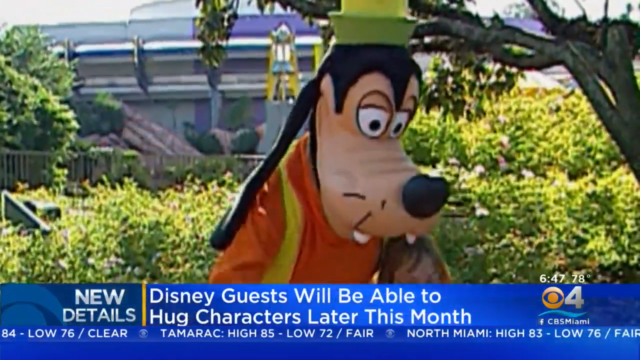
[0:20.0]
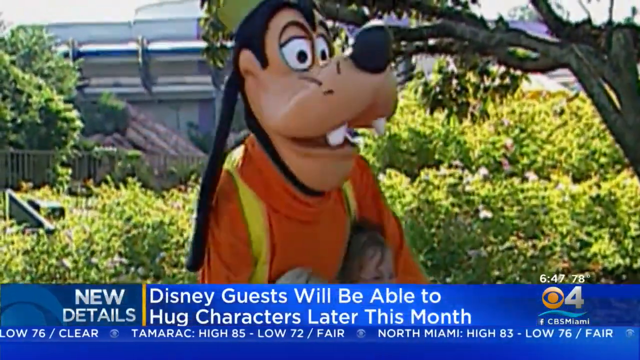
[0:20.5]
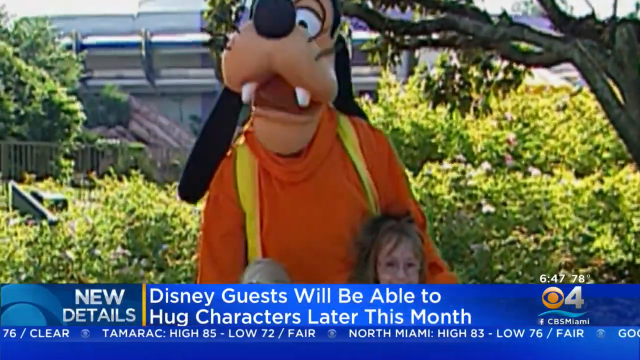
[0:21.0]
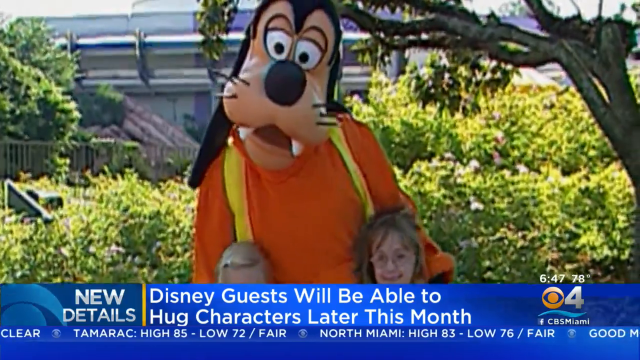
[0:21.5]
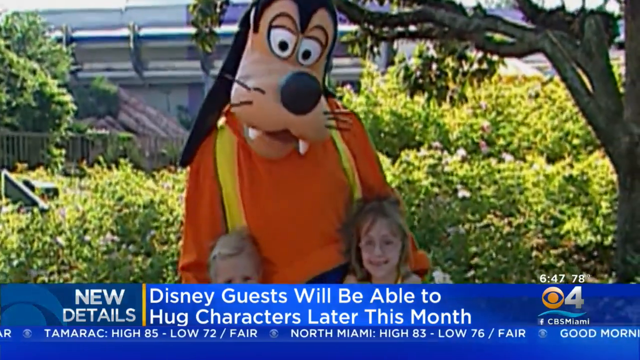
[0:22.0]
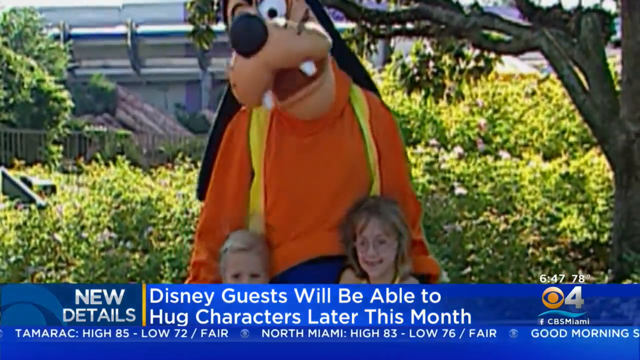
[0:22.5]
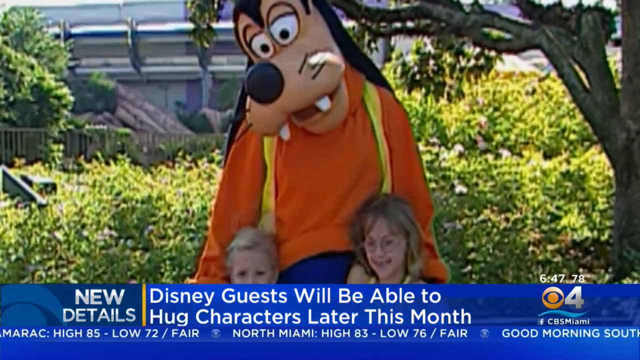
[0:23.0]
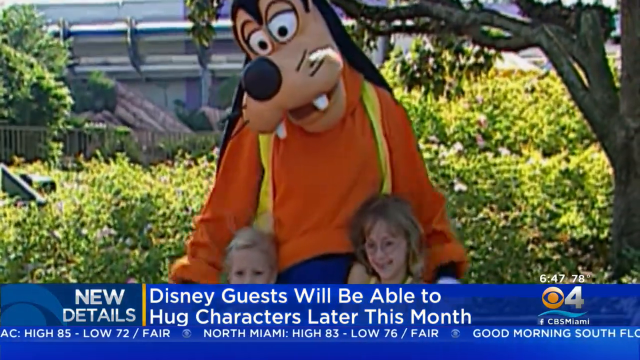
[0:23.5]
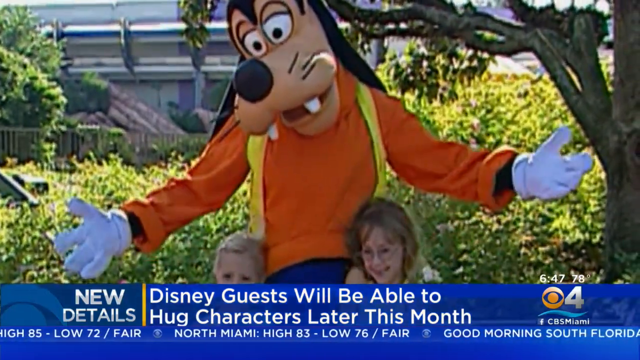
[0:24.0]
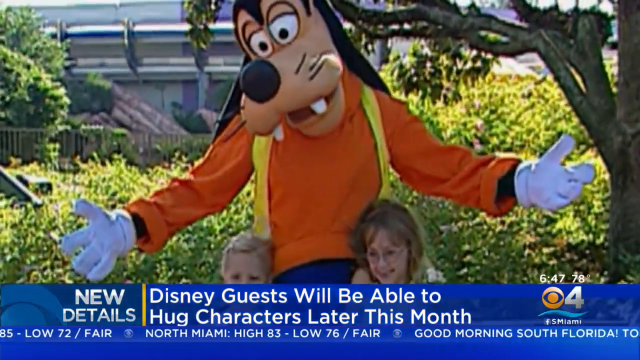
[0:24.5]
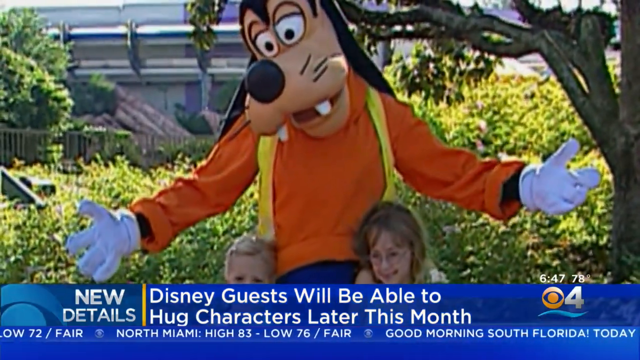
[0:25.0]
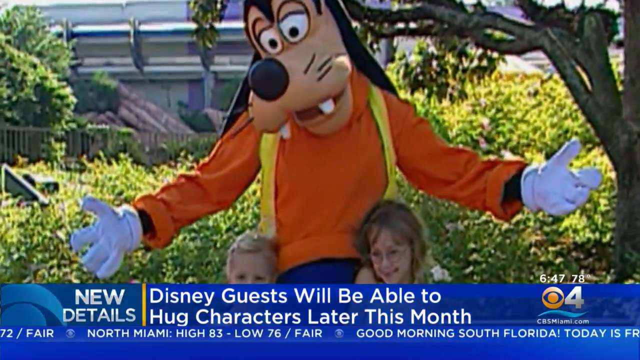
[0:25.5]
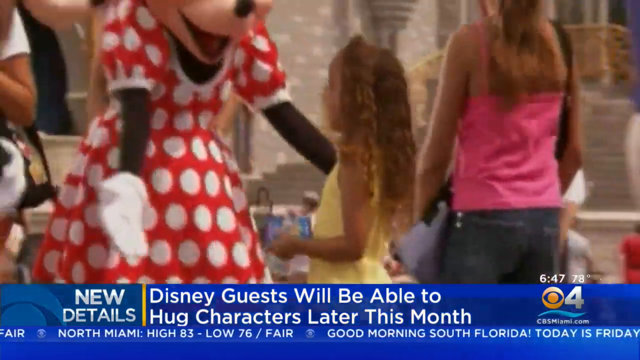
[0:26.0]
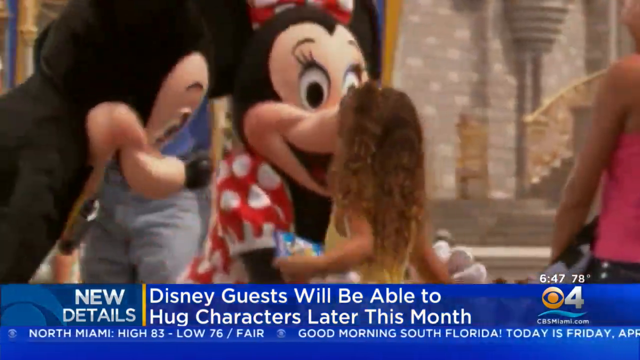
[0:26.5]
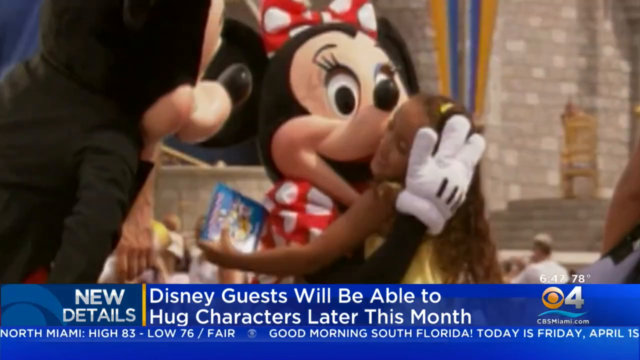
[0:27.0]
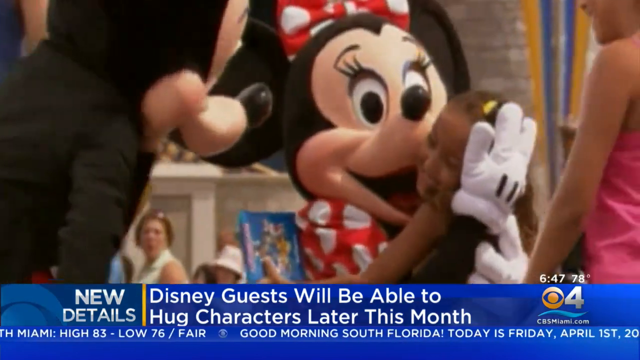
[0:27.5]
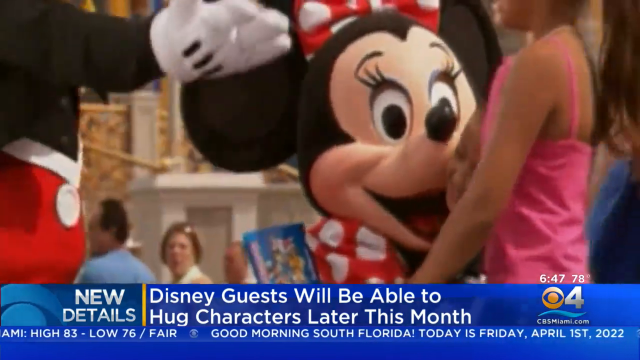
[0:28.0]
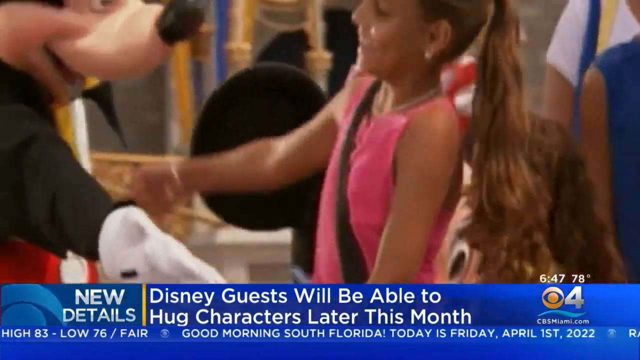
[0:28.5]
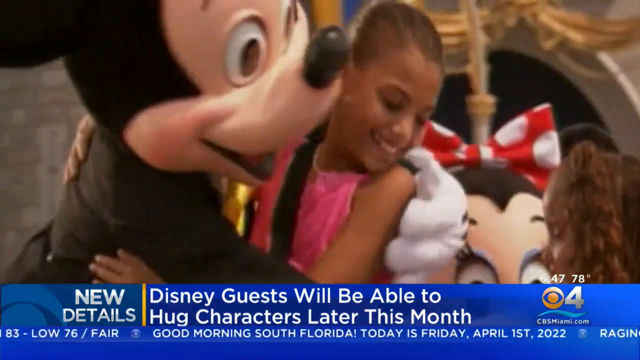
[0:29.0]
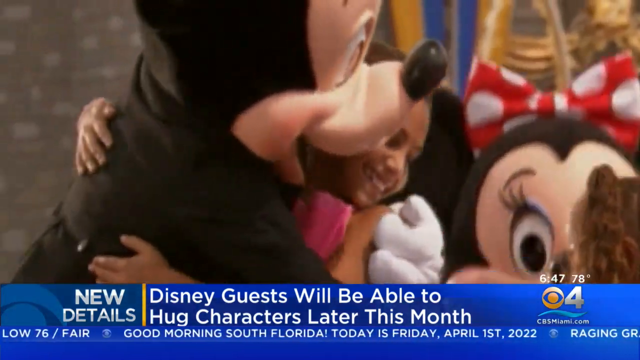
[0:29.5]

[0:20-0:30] The broadcast is from Channel 4 News Miami, CBS. At the bottom, the time is shown as 6:47 and the temperature as 78. Goofy, the Disney character, has his arms wide open with two little kids beside him, and the kids are obviously very happy. The kids are then shown hugging Minnie Mouse and Mickey Mouse. The news caption at the bottom says "New details, Disney guests will be able to hug characters later this month." A crawl bar going across the bottom has the weather and says "good morning, South Florida today is Friday April 1st, 2022."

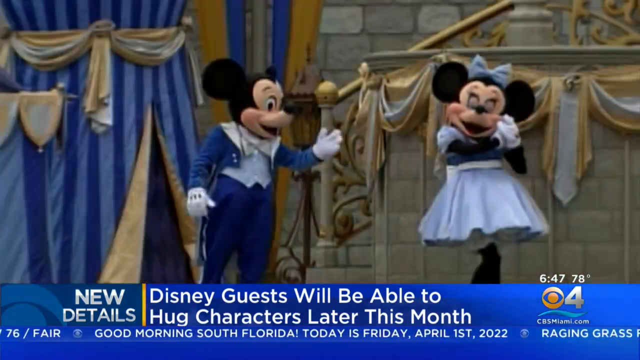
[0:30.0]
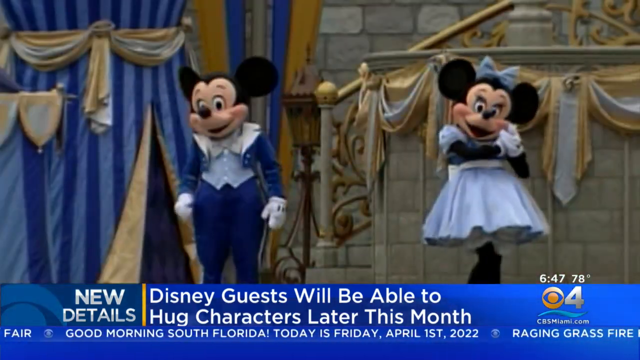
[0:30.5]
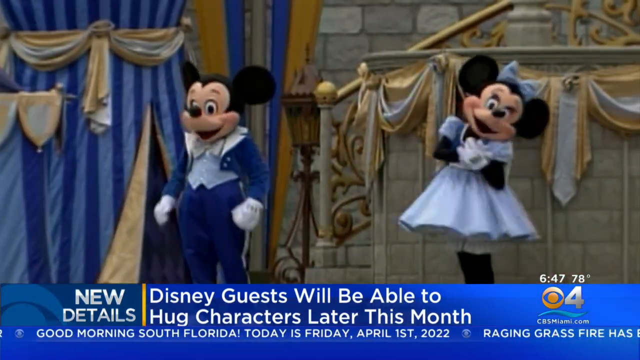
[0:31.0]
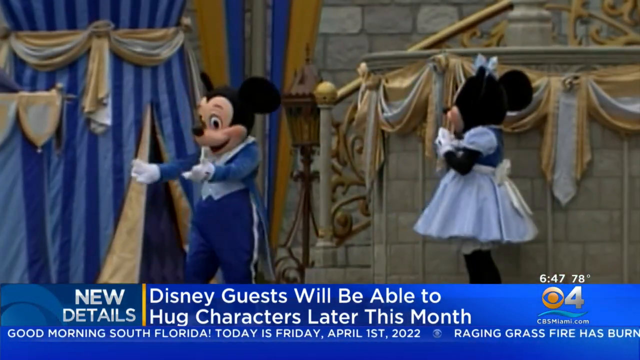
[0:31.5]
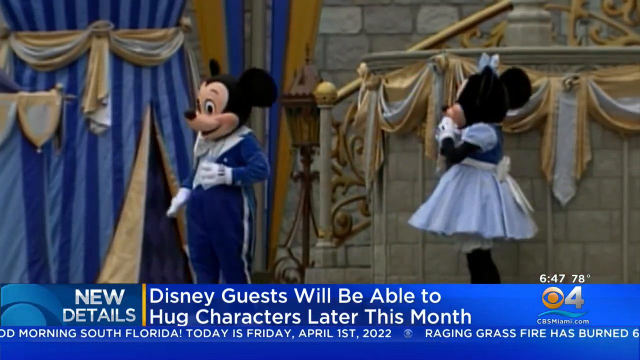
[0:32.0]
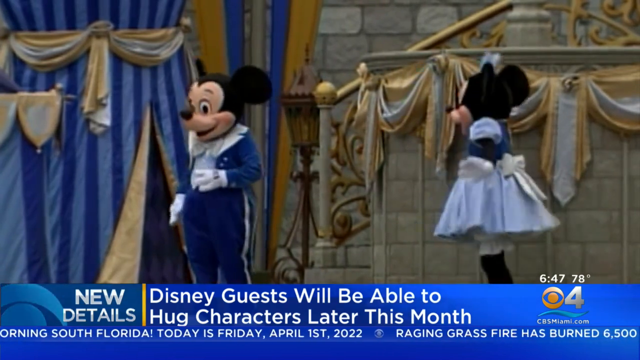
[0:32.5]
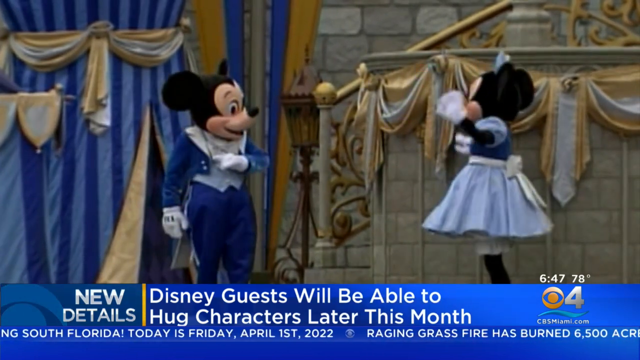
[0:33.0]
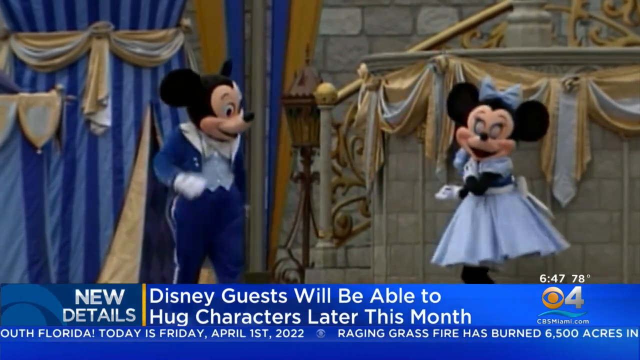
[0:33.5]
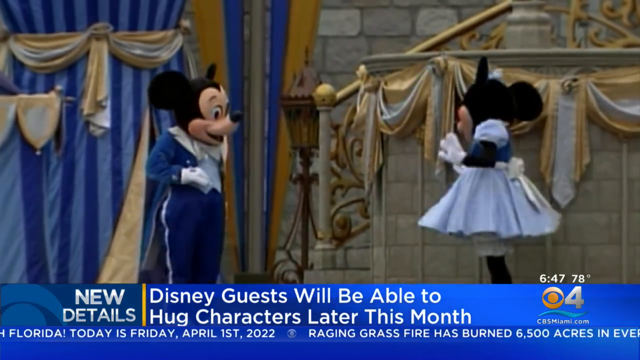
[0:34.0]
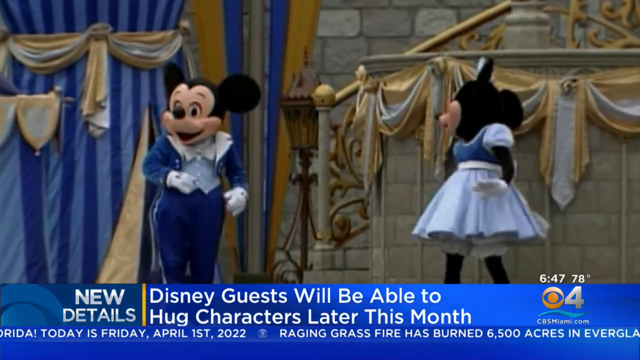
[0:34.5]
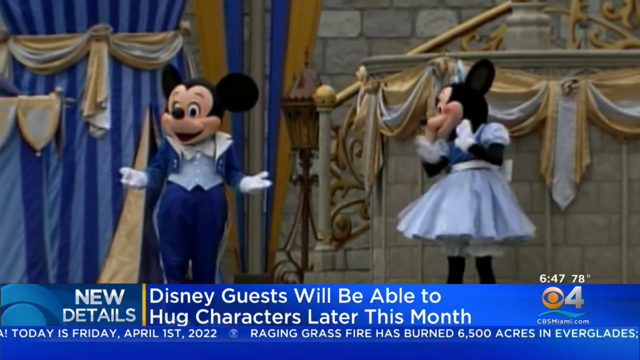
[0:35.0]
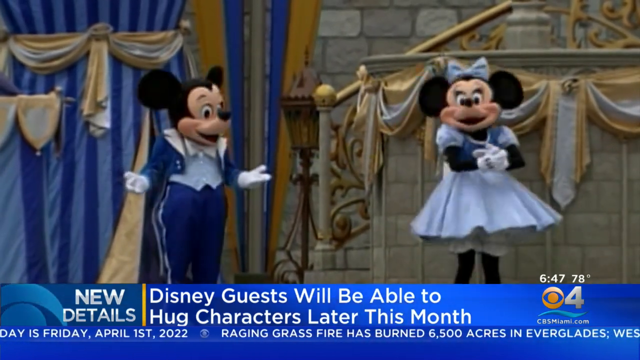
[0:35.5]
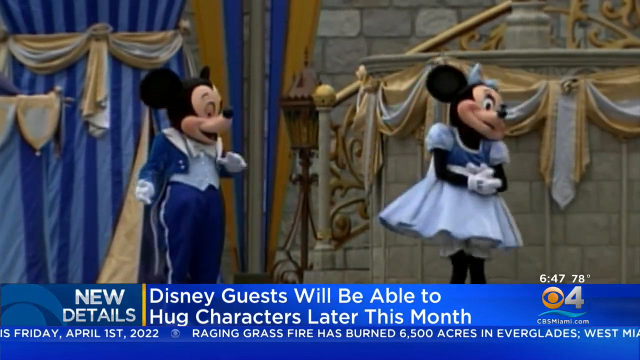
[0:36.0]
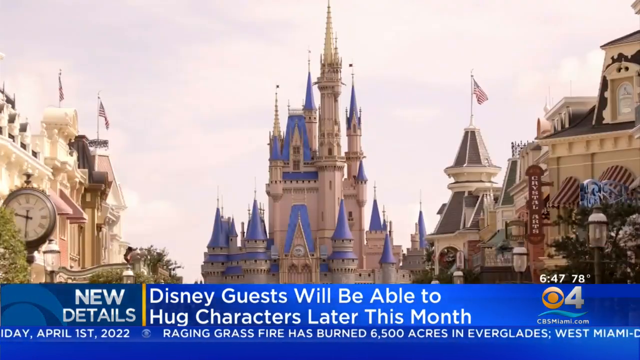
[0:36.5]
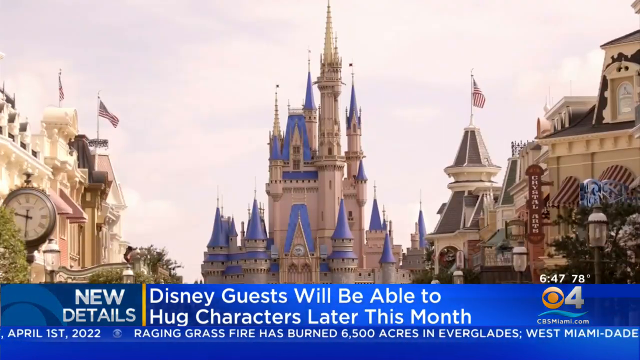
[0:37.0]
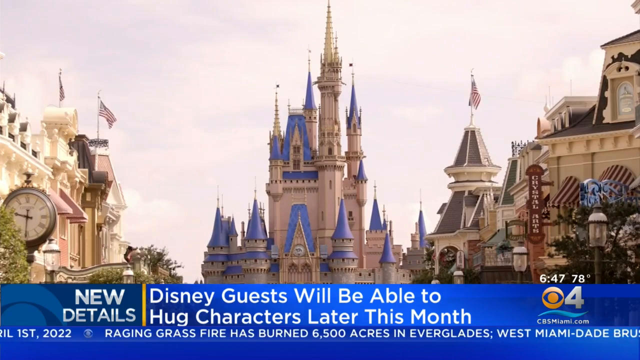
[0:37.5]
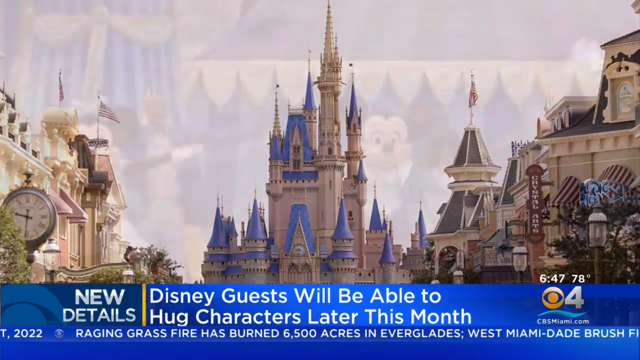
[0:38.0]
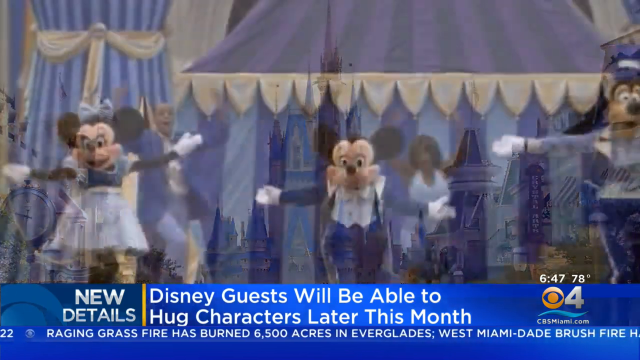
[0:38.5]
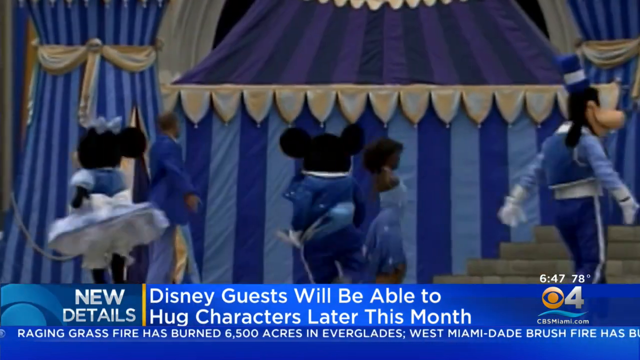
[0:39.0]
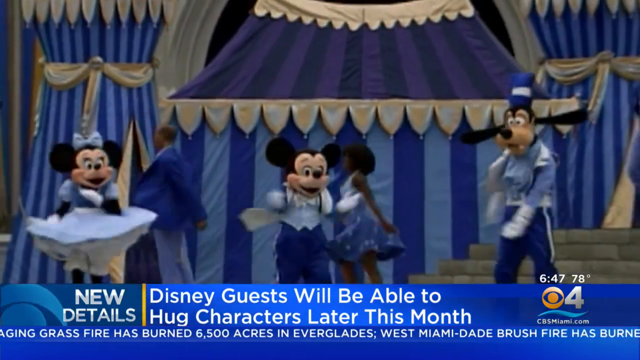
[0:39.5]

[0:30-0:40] The same story continues, apparently from the same news show. In the bottom right corner there is a CBS TV symbol with a 4 by it, for Channel 4, along with "cbsmiami.com," the time, 6:47, and the temperature, 78 degrees. The same caption at the bottom says "New details, Disney guests will be able to hug characters later this month." The first scene shows Minnie Mouse and Mickey Mouse. The video then shifts to the Disney castle with blue spires, and then to Mickey Mouse, Minnie Mouse and Goofy dancing. The crawl bar along the bottom says "today is Friday, April 1st, 2022. A raging grass fire has burned 6,500 acres in the Everglades."